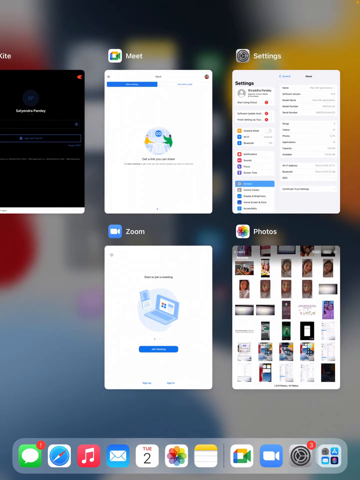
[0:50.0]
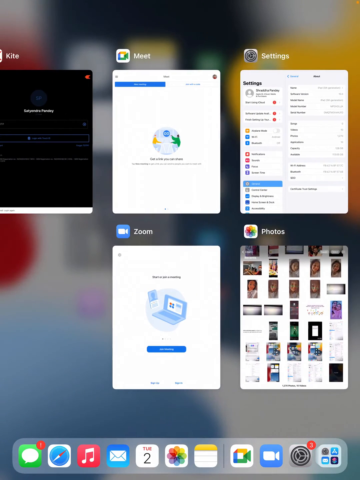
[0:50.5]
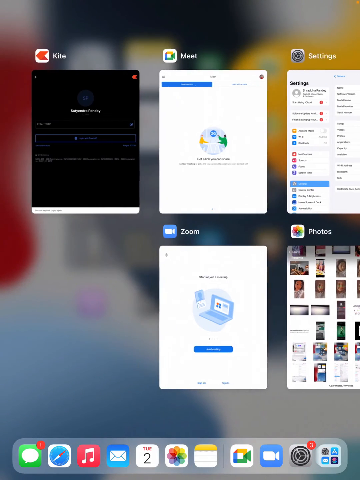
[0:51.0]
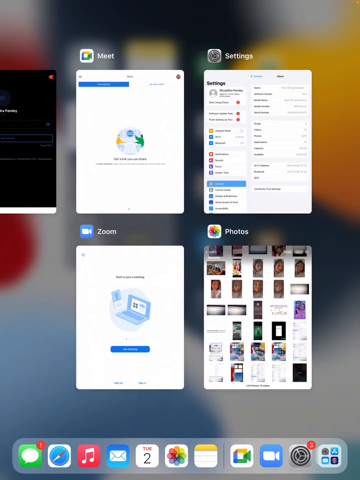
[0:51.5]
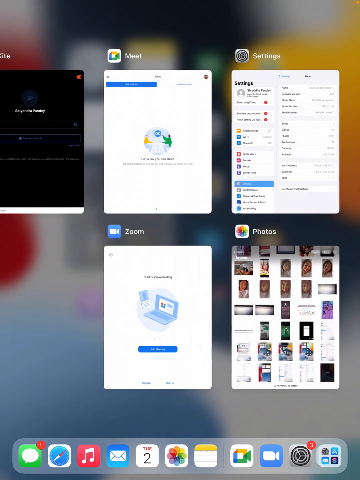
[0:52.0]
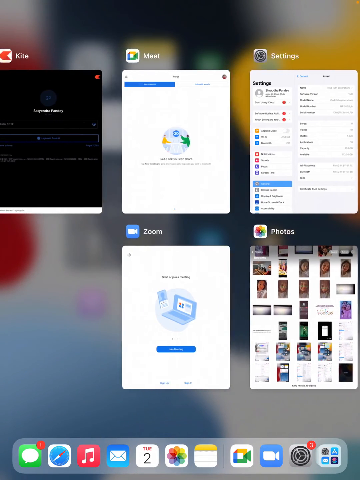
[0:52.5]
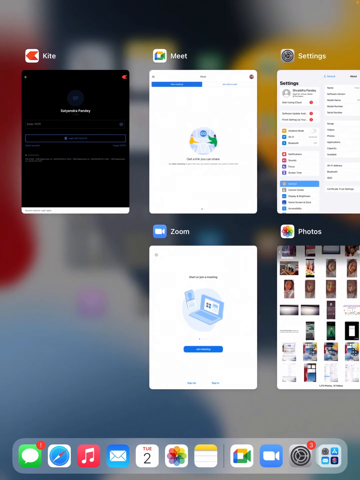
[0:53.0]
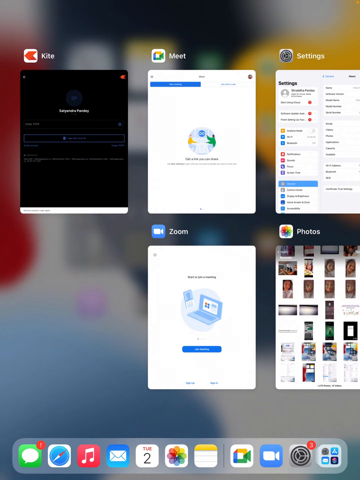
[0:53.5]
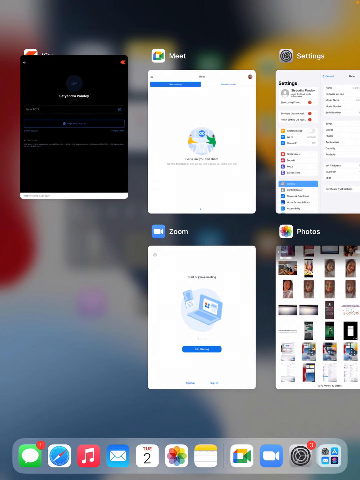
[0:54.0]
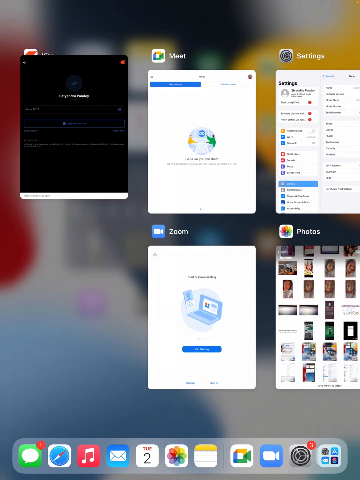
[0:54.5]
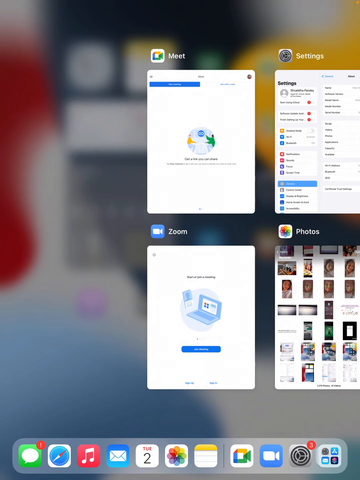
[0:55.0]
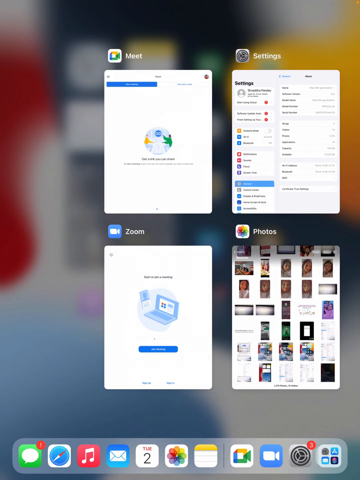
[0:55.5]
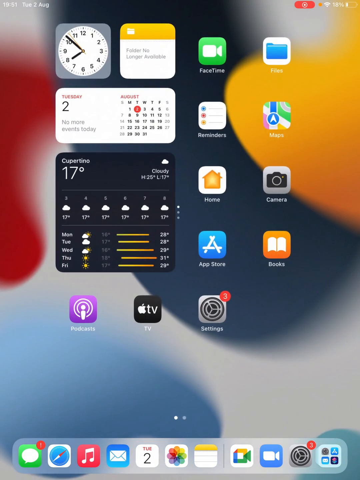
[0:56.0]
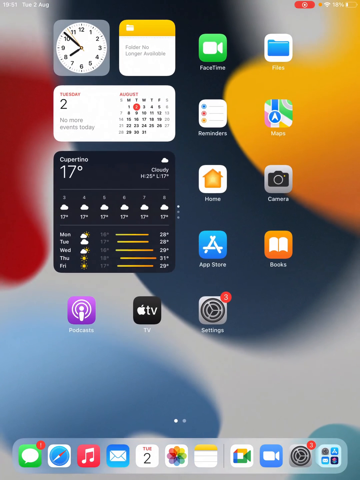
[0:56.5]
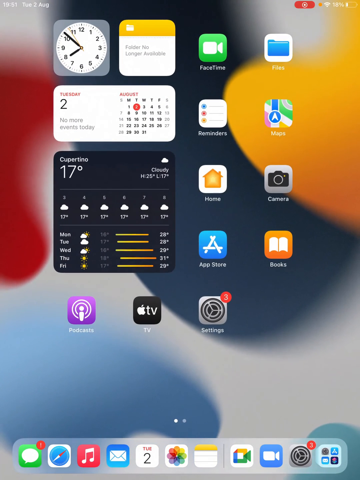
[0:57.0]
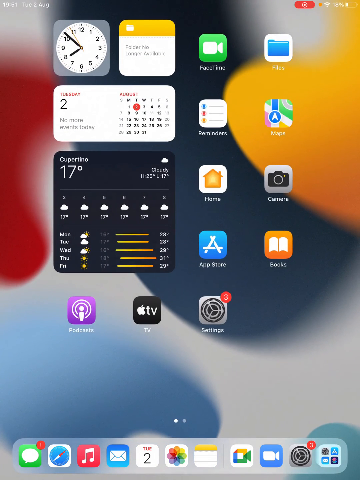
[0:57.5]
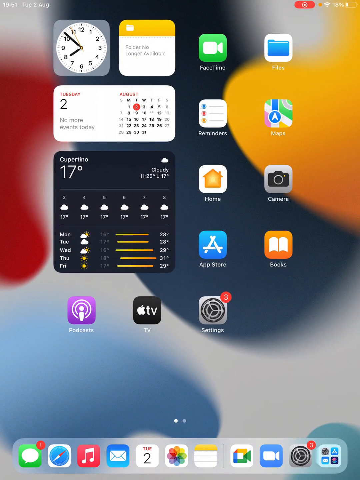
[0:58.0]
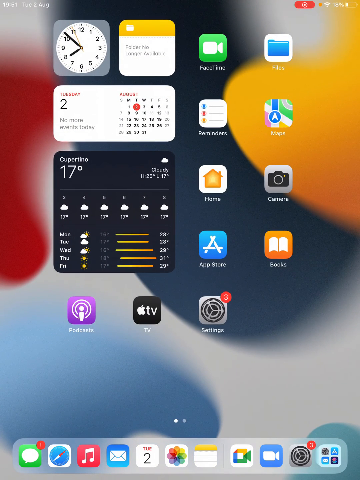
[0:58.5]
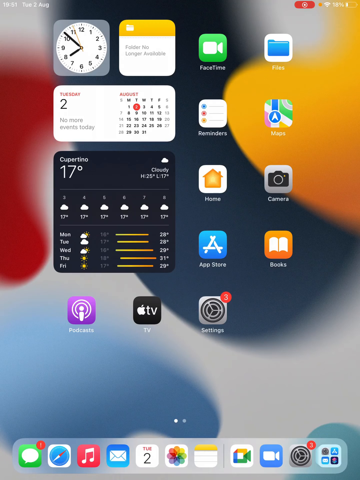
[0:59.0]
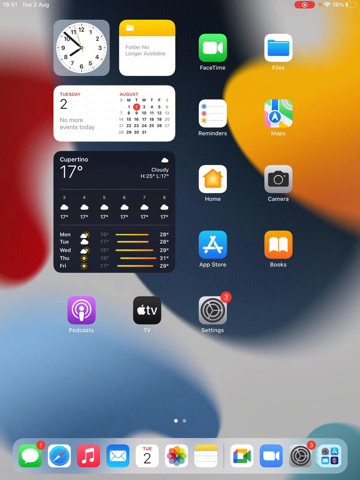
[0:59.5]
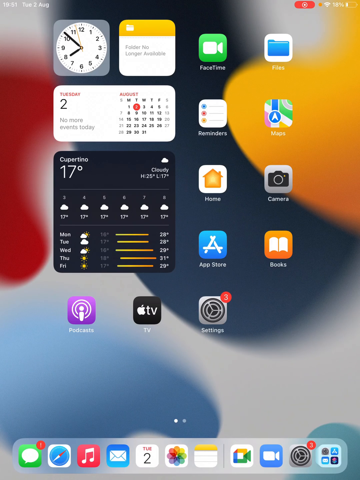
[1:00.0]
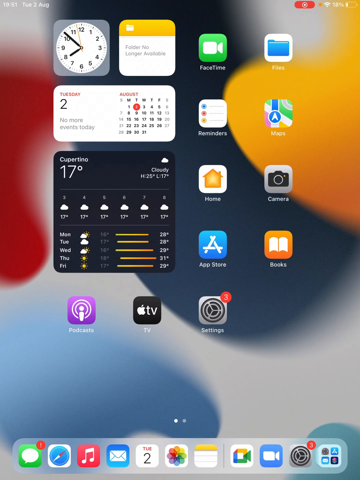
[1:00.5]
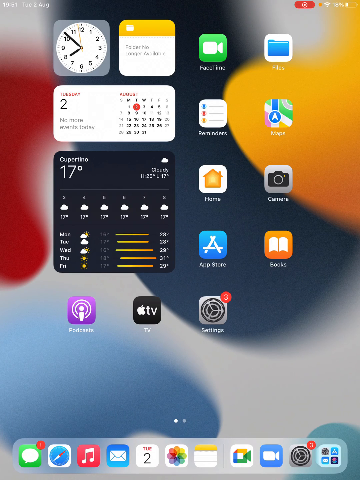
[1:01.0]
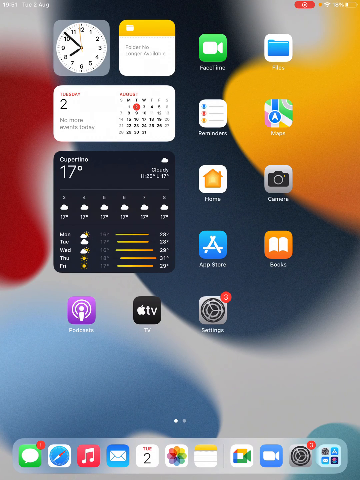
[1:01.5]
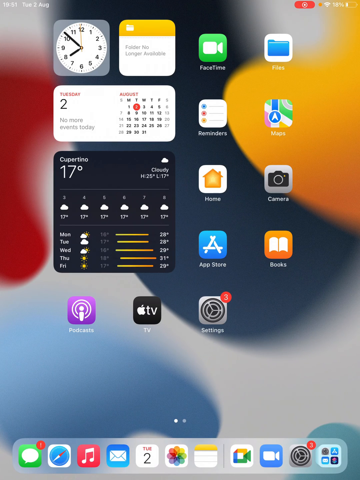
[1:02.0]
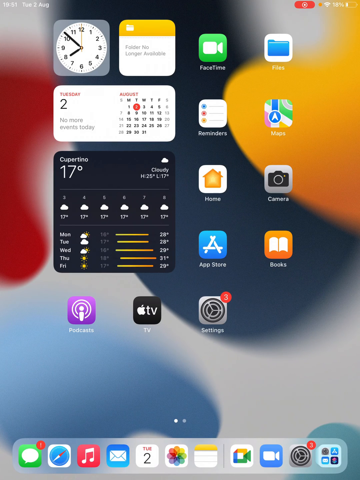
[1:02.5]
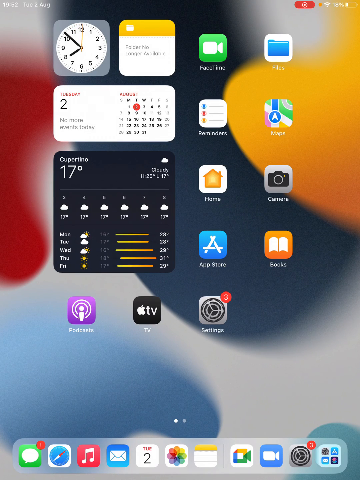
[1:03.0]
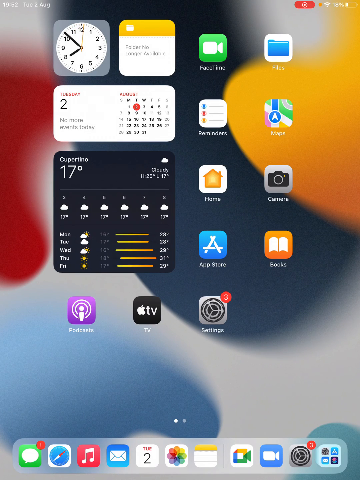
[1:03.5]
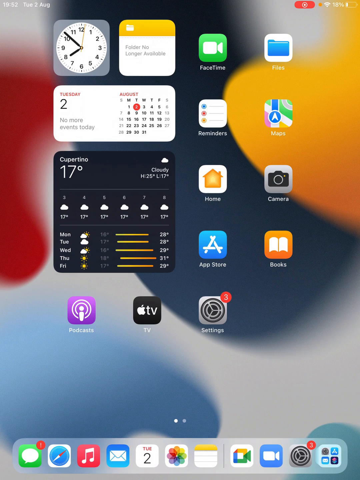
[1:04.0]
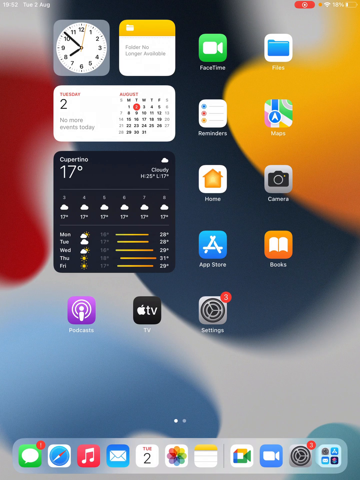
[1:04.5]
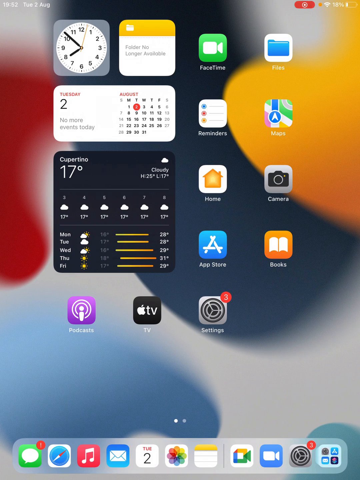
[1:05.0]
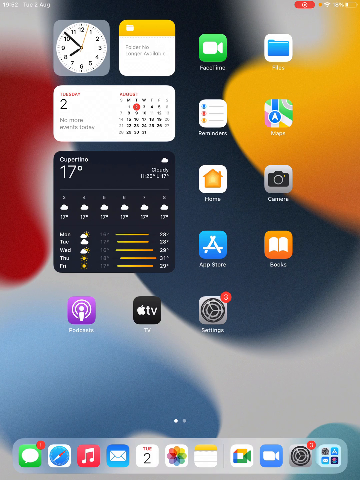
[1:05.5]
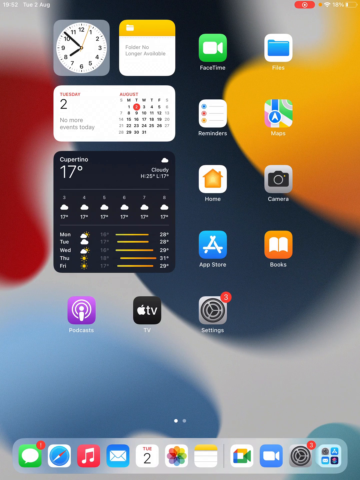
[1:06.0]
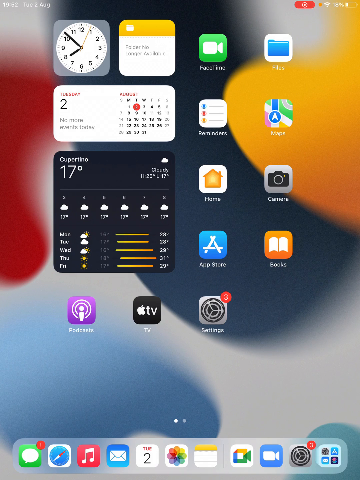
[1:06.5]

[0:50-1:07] The person tries to swipe to the left but the screen bounces back, tries to the right and it bounces back, and tries once more to the left, and again it bounces back, as if pushing against something. They then swipe up on the top left window, labelled "Kite" above it, and it disappears, while the windows to its right readjust slightly further to the left. The view then returns to the main tablet or phone screen seen earlier, which stays there for a couple of seconds with nothing else happening.